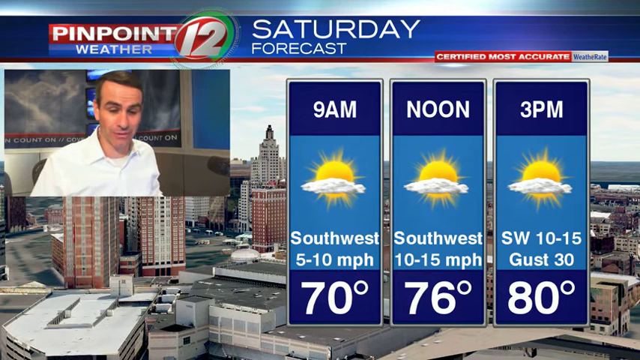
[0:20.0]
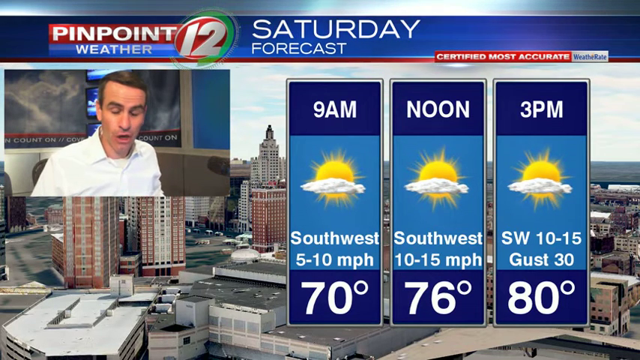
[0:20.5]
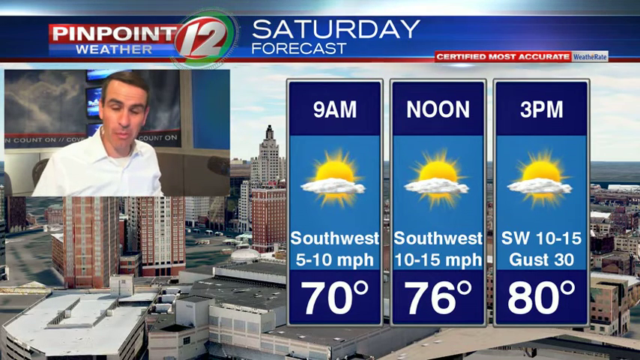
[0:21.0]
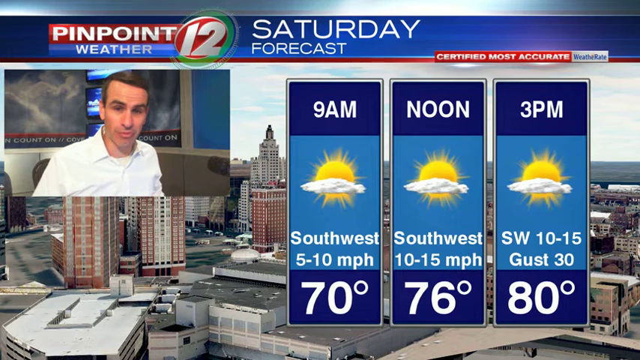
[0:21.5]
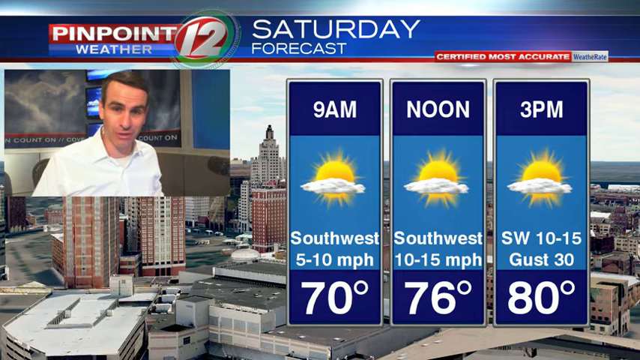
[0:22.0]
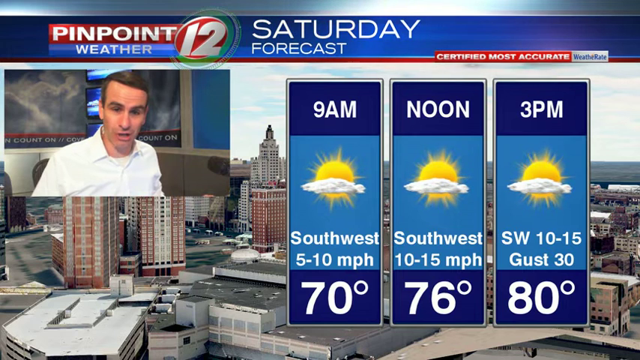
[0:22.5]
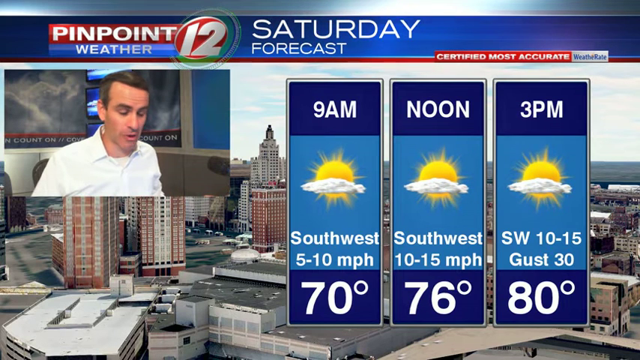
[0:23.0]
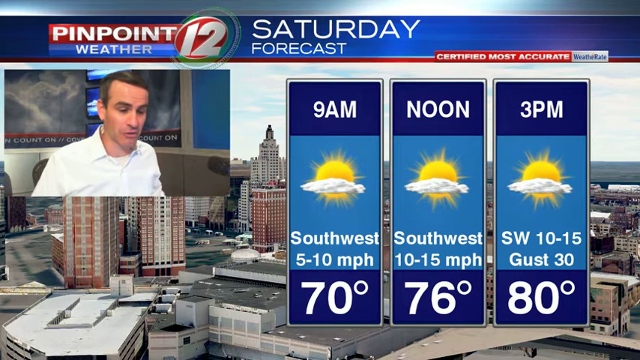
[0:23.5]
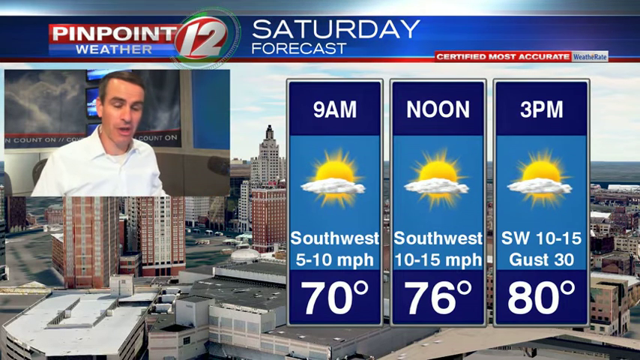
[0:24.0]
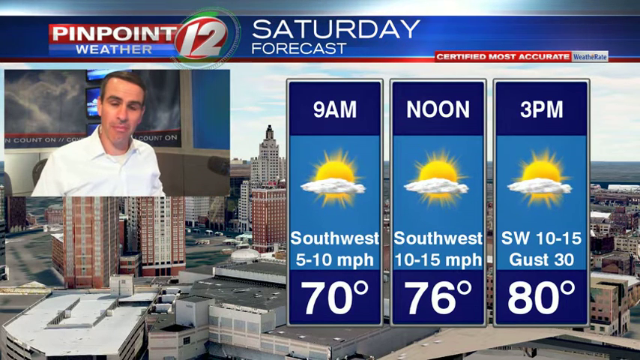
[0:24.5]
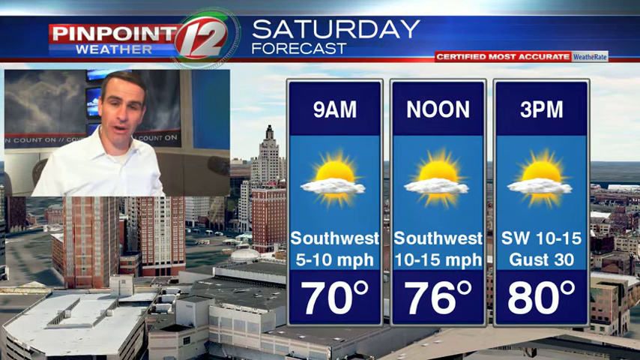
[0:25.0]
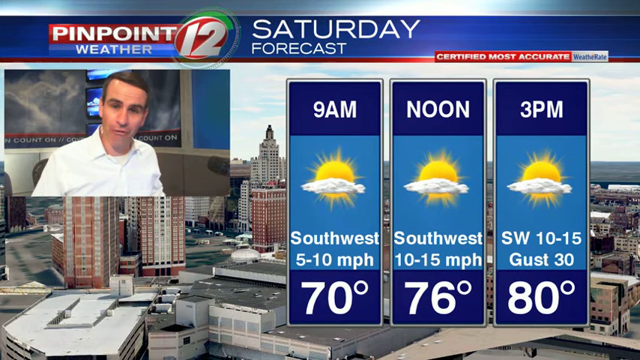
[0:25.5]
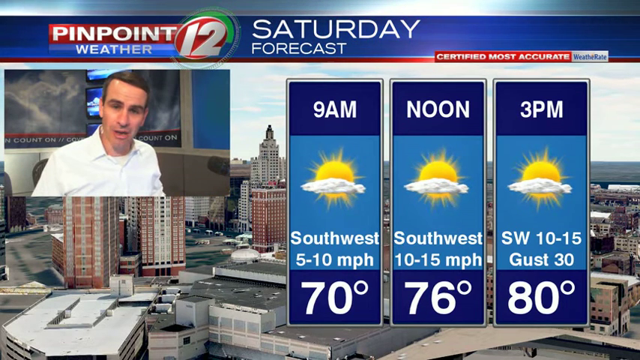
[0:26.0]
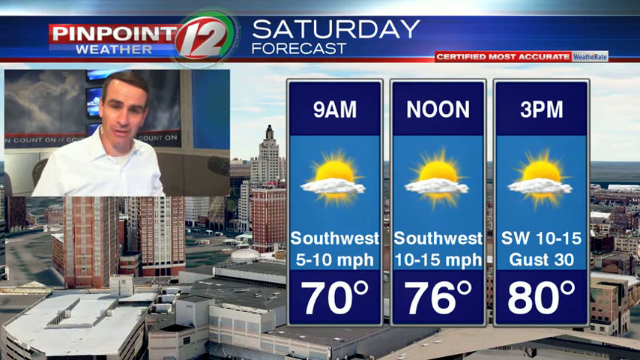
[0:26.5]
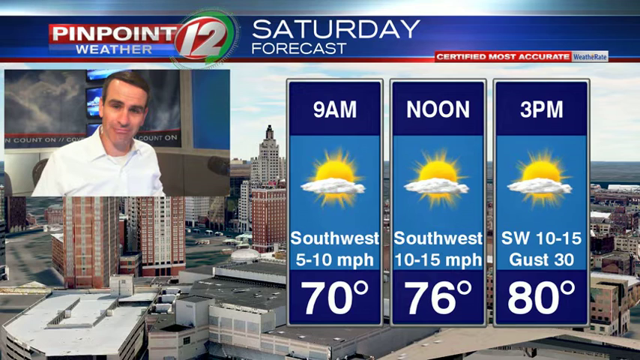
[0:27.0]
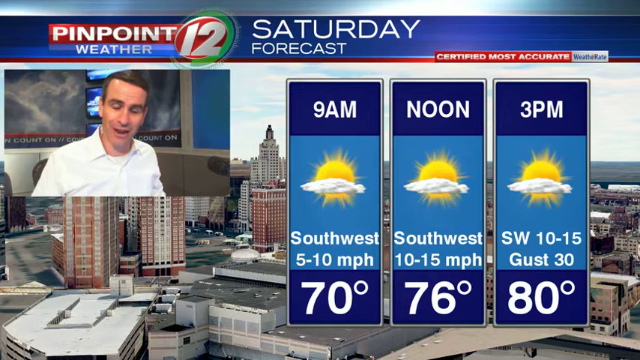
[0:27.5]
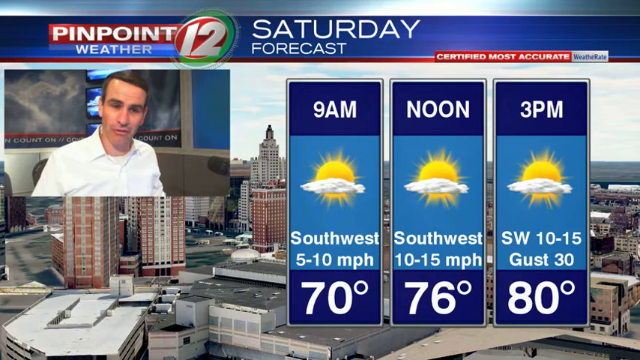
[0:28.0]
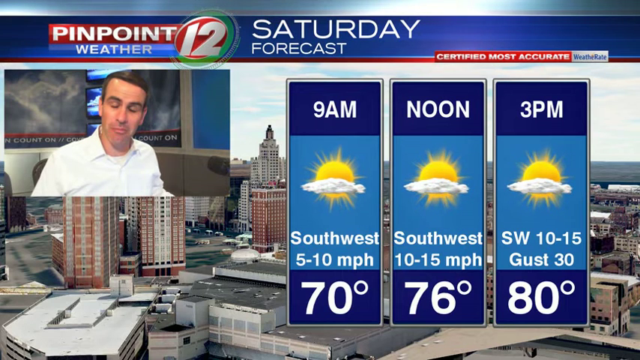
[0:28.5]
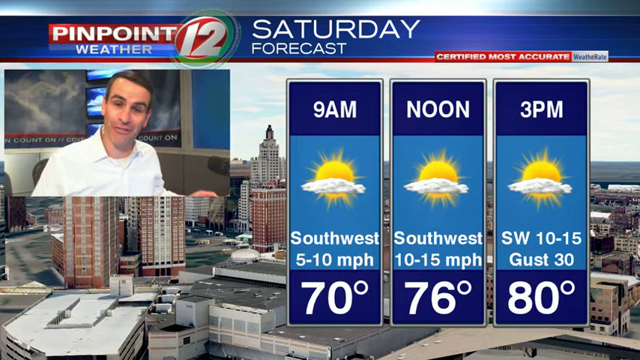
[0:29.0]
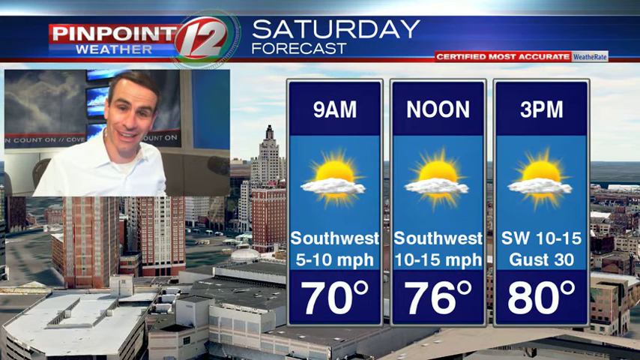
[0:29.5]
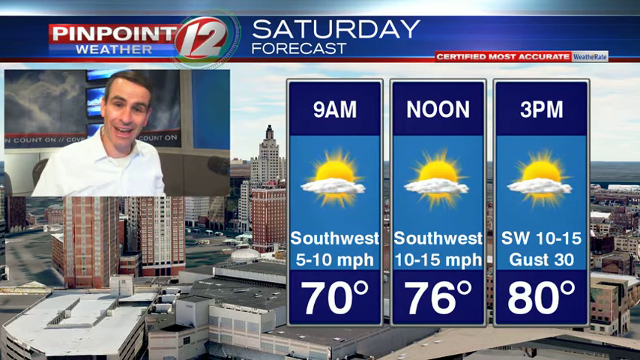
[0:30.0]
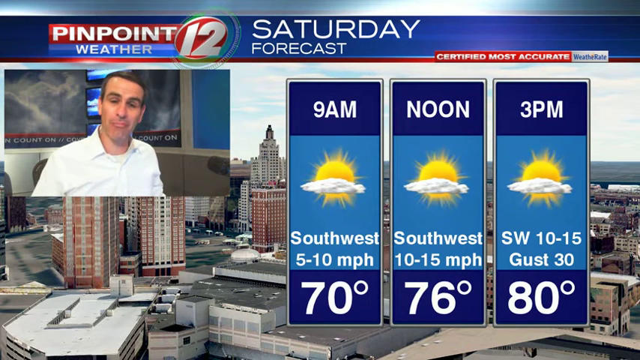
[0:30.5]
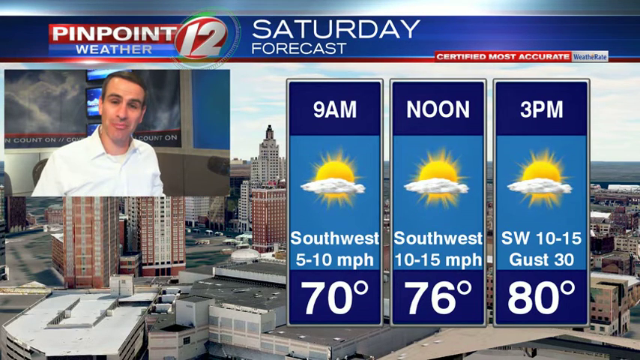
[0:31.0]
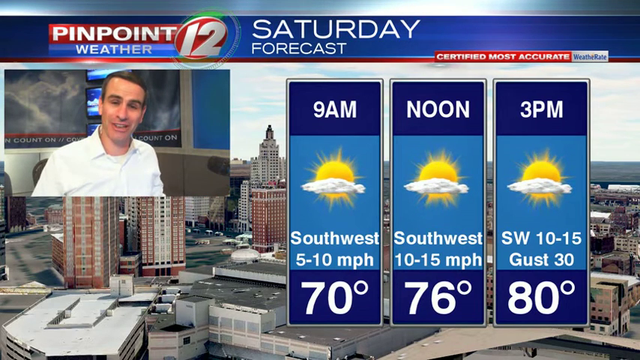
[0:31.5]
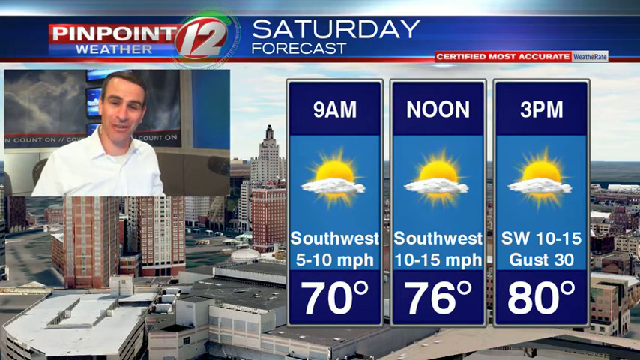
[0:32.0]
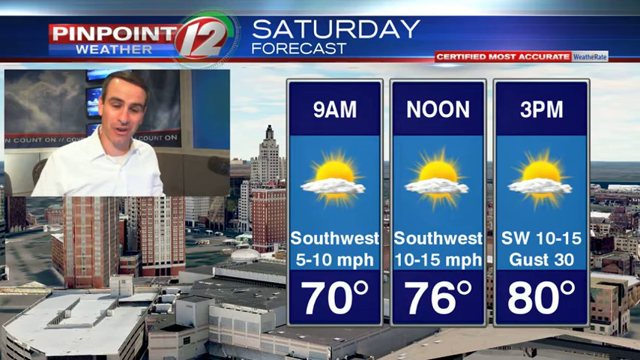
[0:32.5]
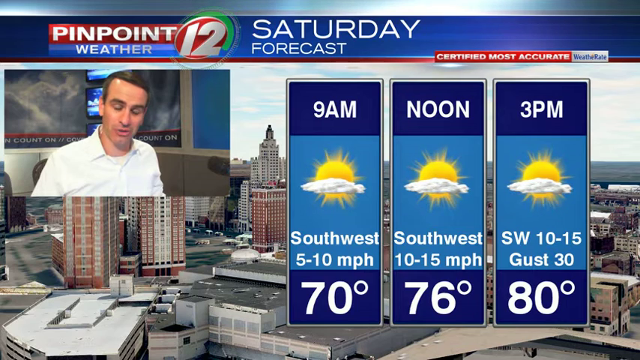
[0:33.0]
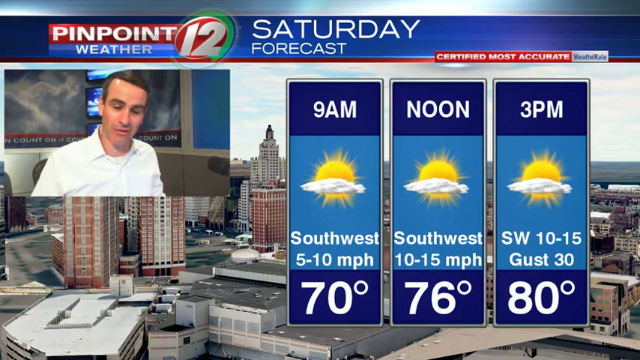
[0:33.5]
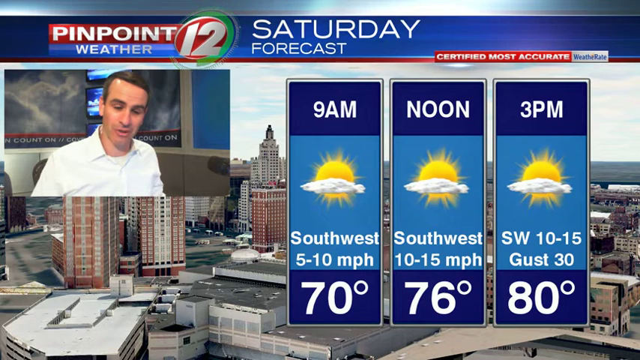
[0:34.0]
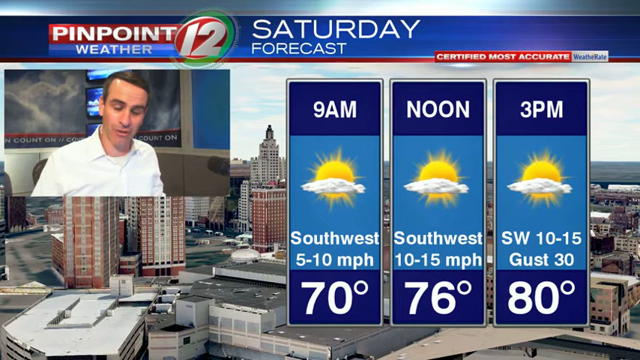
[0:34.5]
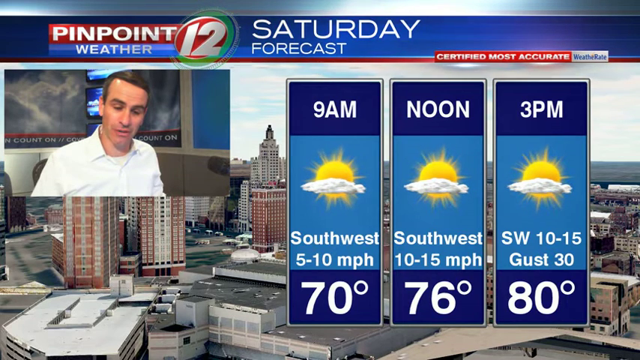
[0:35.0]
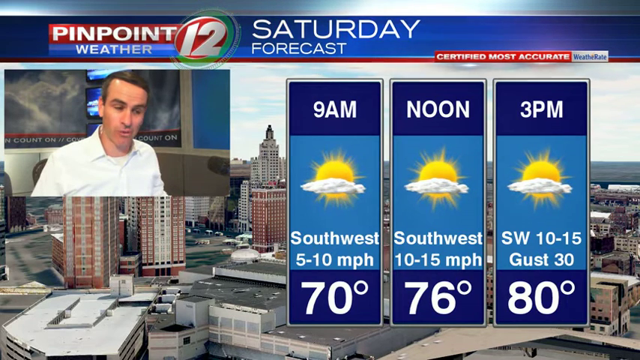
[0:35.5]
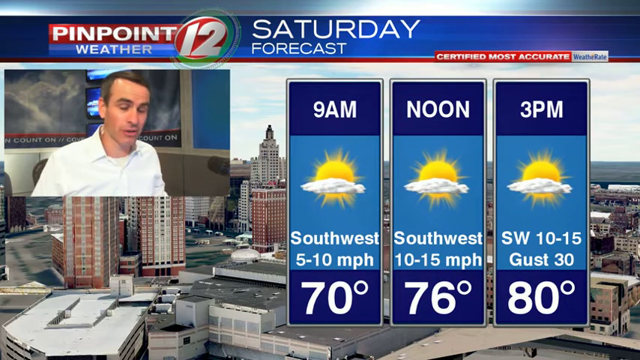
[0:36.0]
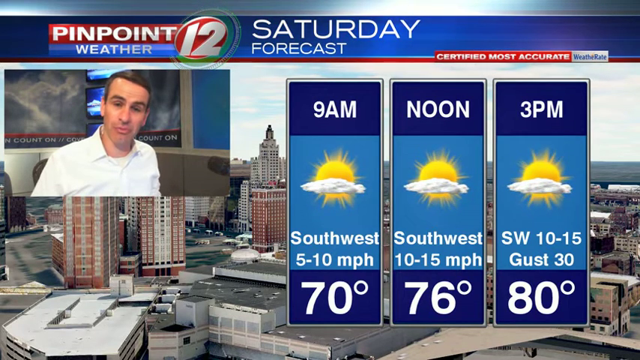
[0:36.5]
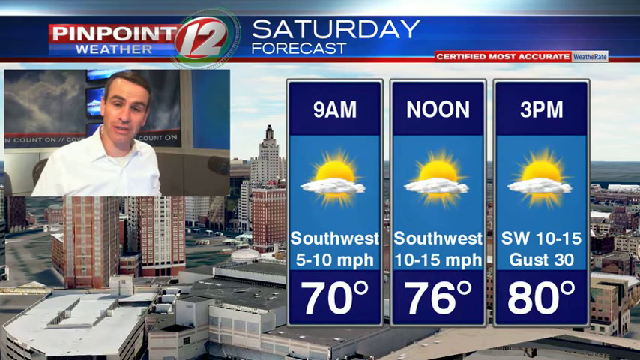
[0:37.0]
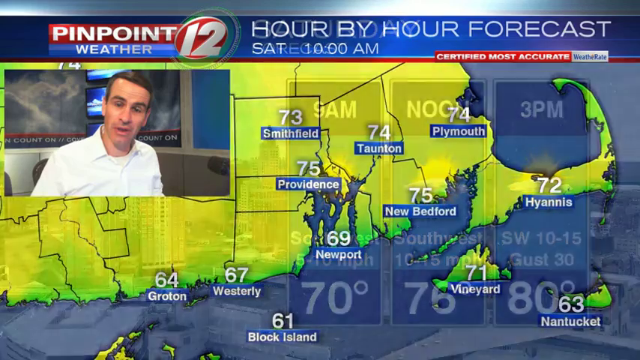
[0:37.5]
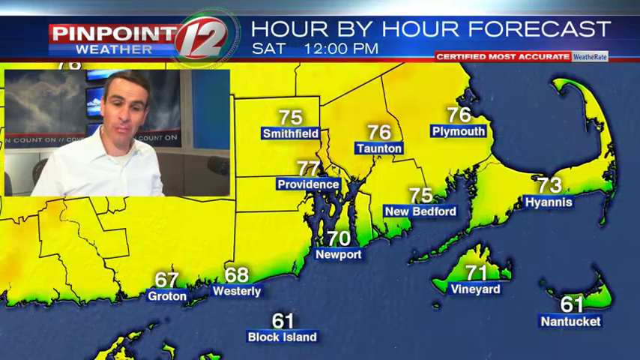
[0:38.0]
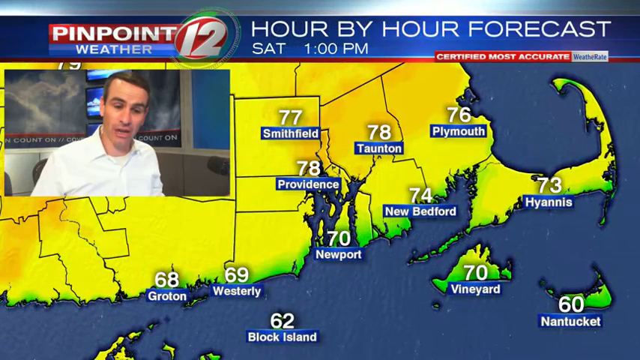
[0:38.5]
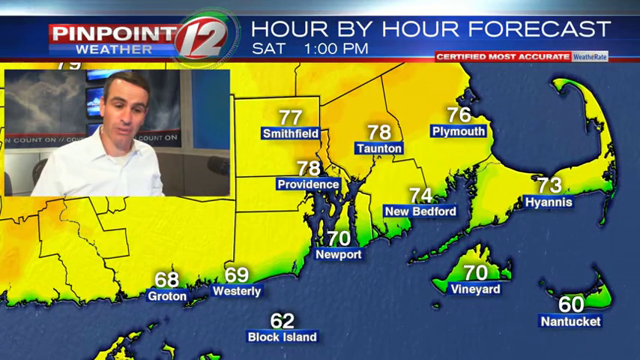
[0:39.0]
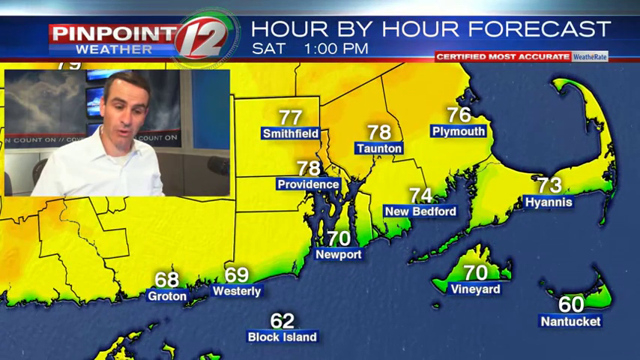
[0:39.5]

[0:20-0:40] The man continues with the 9 a.m., noon and 3 p.m. forecast, which shows conditions that are a little cloudy with a sun in the background. The image then changes to a map of the region showing cities including Smithfield, Toton, Plymouth, Hyannis, New Bedford, Providence, Newport, Wininger, Nantucket, Westerly, Groton and Block Island, each with a different temperature. The upper ones, such as downtown Providence, are at about 78 degrees, while the lower ones, Block Island and Nantucket, are at 62 and 60 degrees respectively.